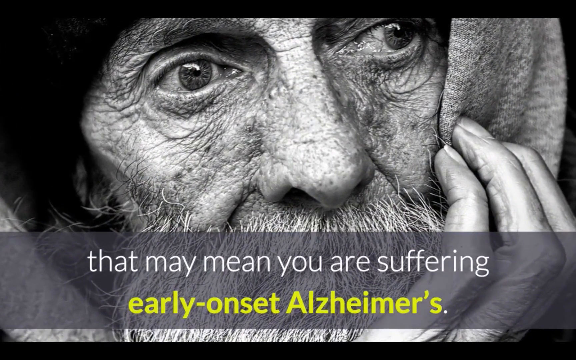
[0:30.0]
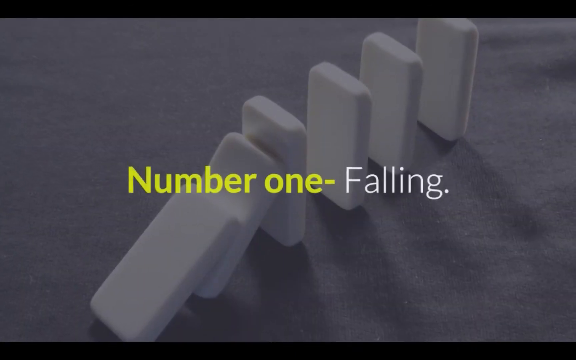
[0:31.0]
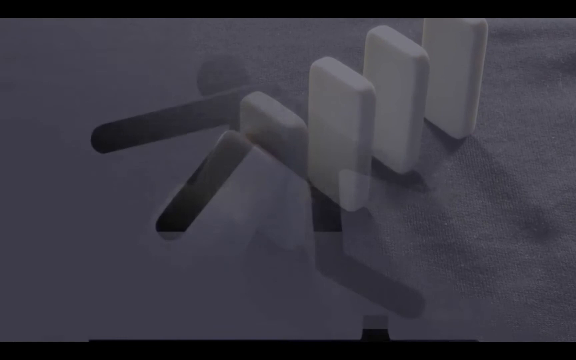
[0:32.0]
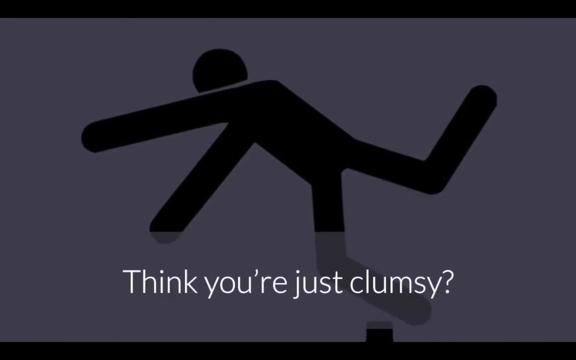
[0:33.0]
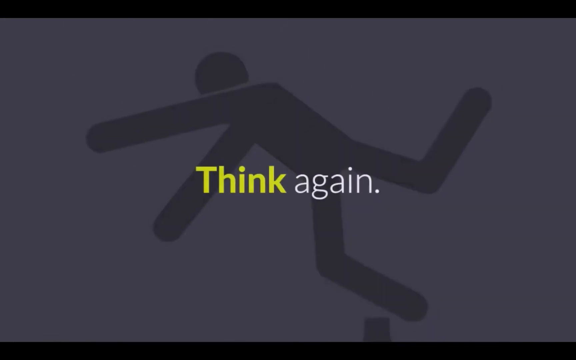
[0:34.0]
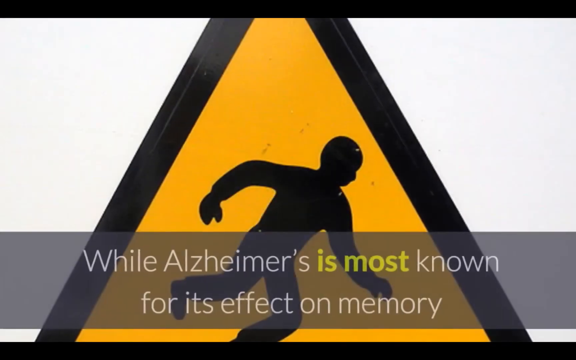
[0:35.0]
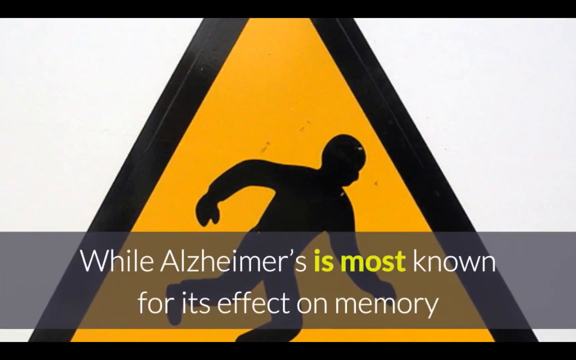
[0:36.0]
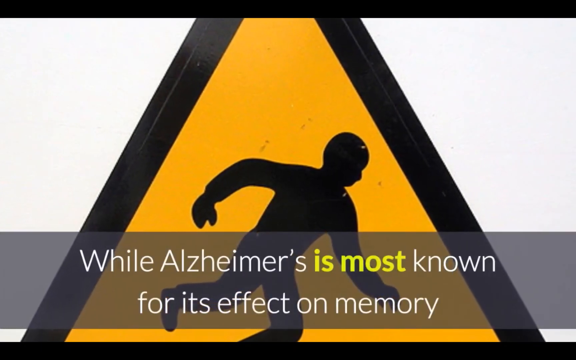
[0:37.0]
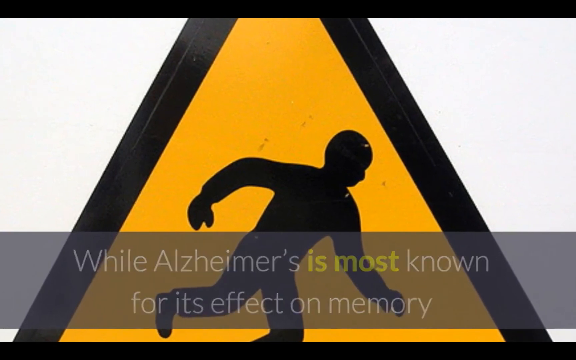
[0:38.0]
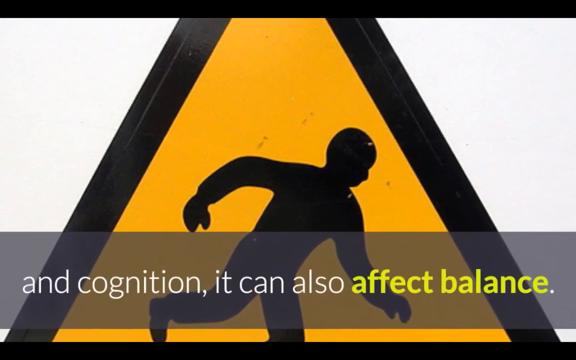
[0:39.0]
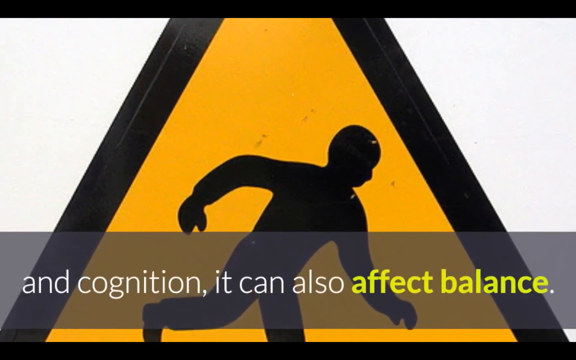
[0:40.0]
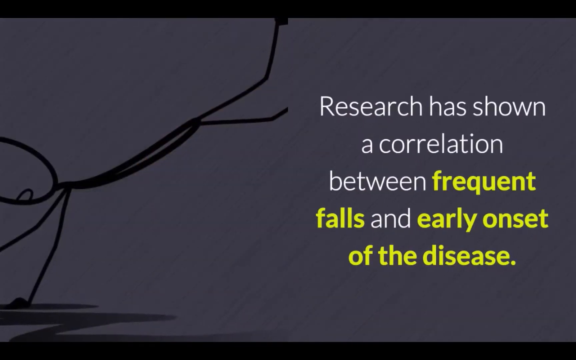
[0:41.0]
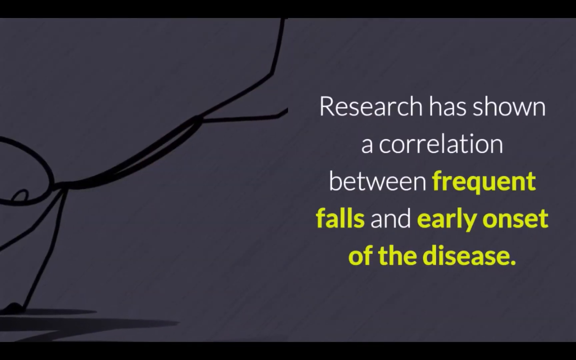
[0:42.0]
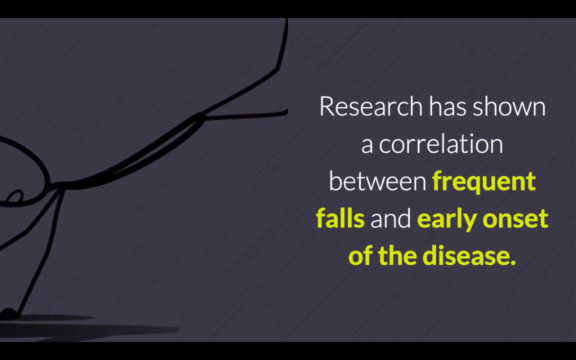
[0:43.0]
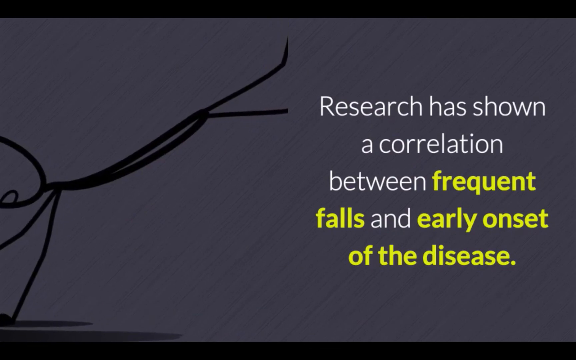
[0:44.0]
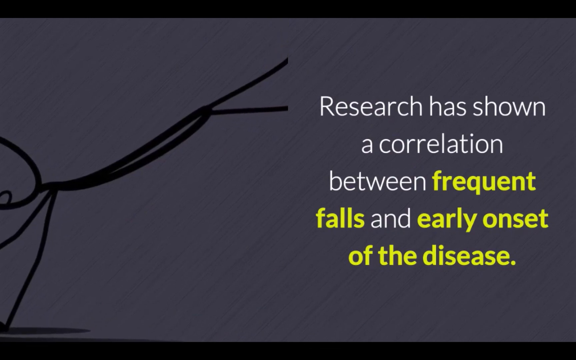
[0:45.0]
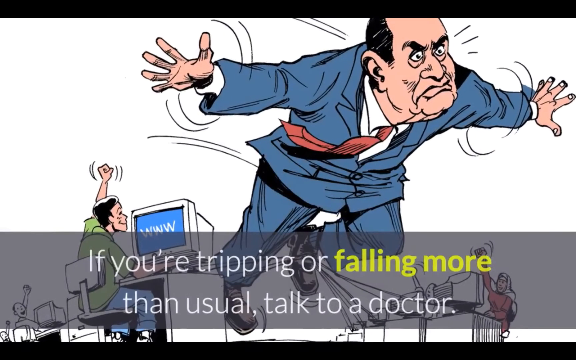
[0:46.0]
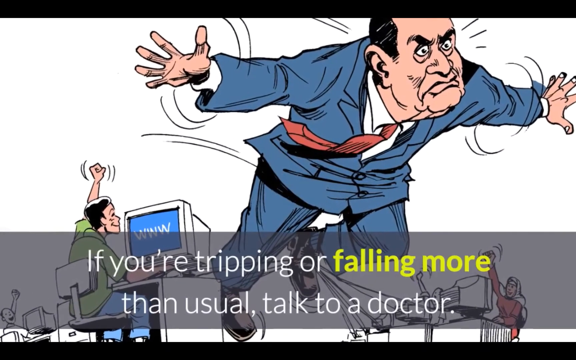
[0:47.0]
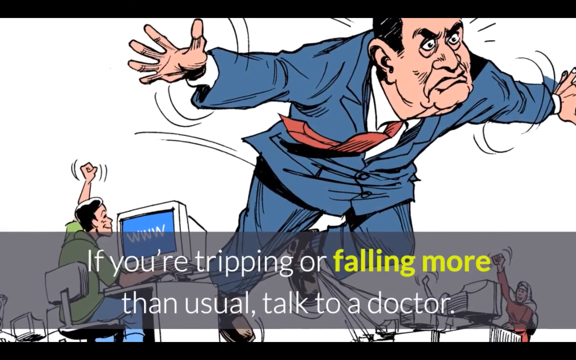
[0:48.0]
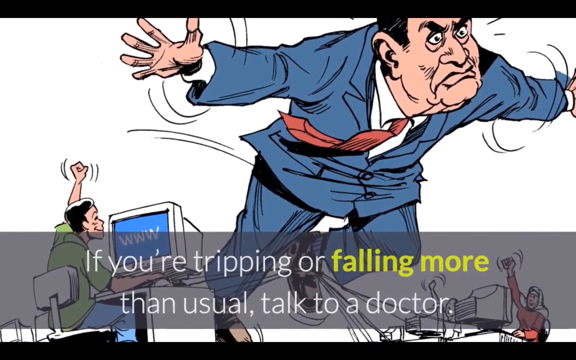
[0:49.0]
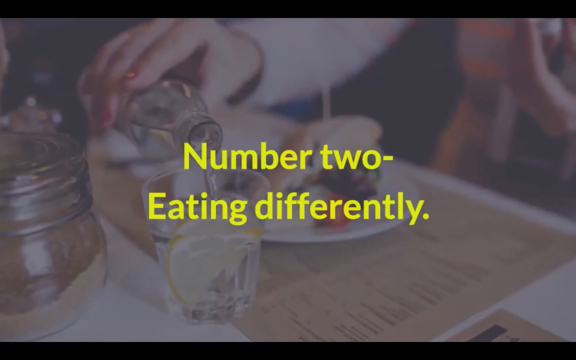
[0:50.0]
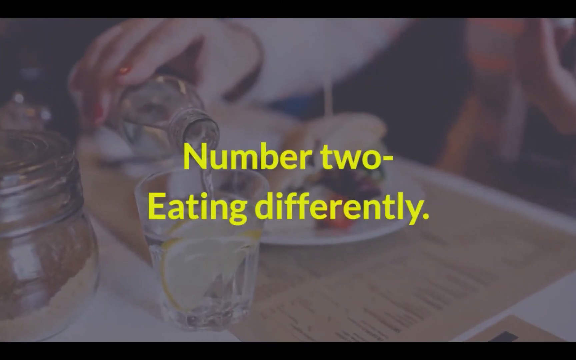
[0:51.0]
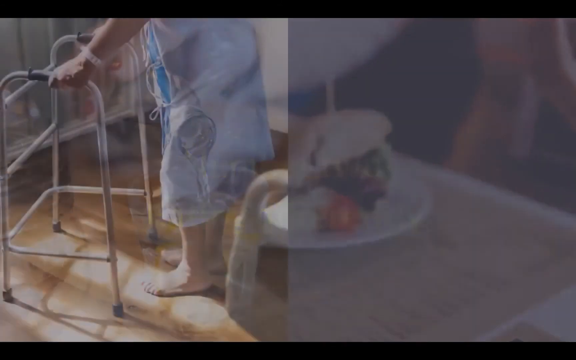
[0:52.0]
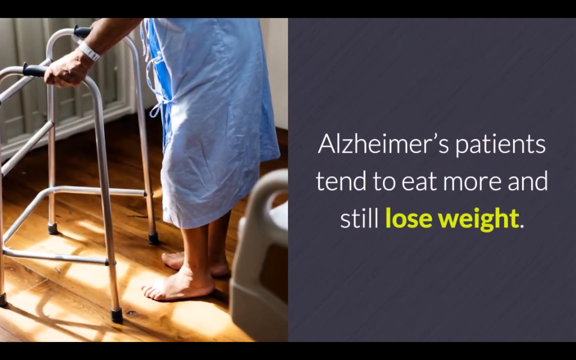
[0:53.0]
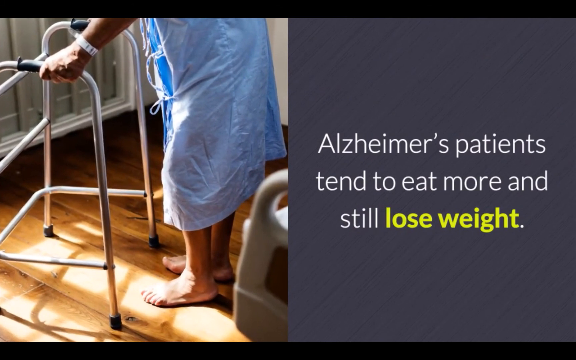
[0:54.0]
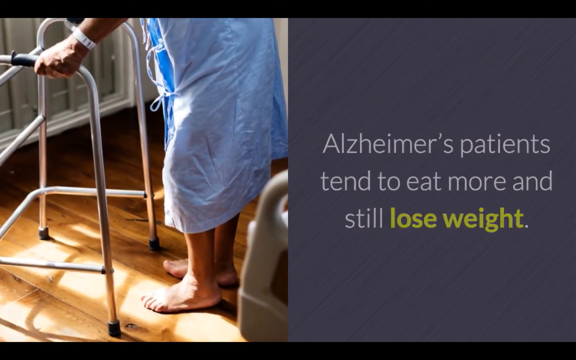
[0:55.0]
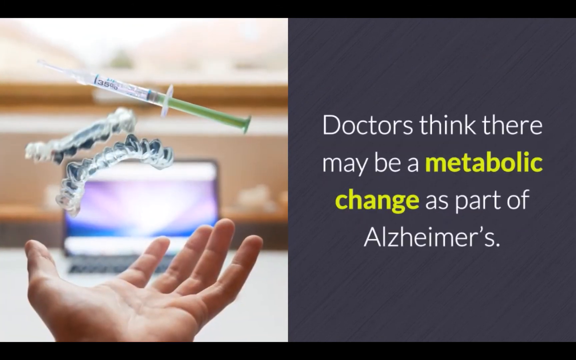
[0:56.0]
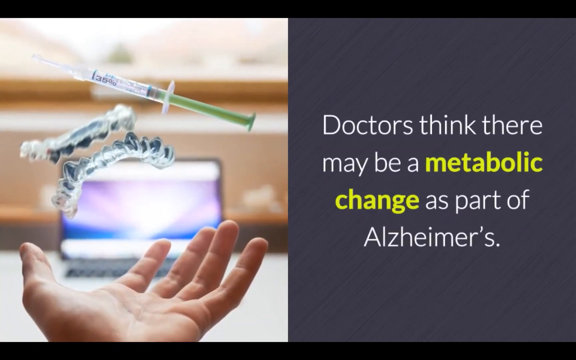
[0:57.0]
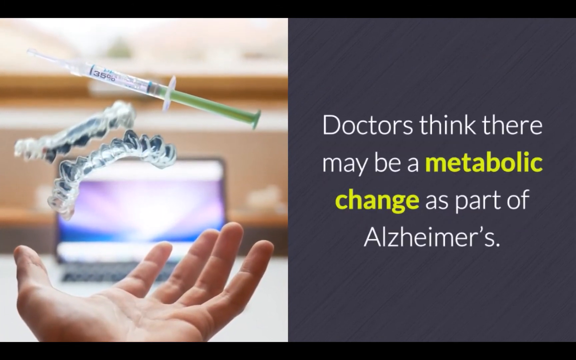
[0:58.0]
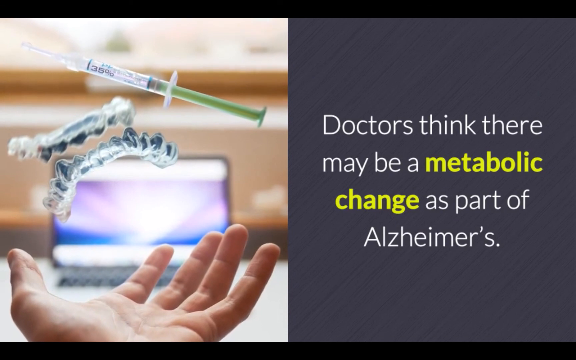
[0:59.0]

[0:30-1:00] A man puts his hand on his cheek. A label in yellow and white reads "number one falling." A black cartoon figure that looks like it has tripped appears with the text "think you are just clumsy." A triangle with yellow inside shows a cartoon of a person falling down, along with text saying the disease "is most known for its effect on memory" and that it can affect your balance. A purple page has white and yellow text beginning "researcher has shown a," referring to frequent falls and the disease. People sit on chairs, each with one hand in the air, and a man is tripping or falling. A glass of water appears, and an old person uses something to walk. Finally, a hand throws an injection into the air.